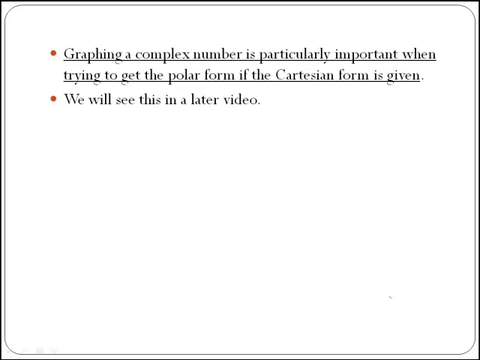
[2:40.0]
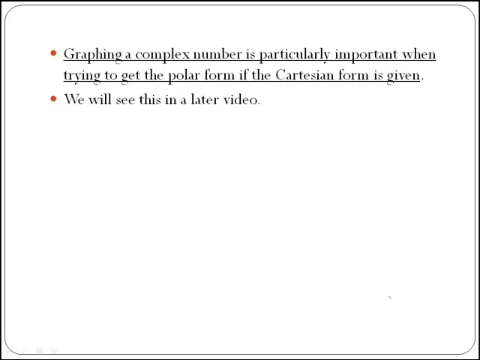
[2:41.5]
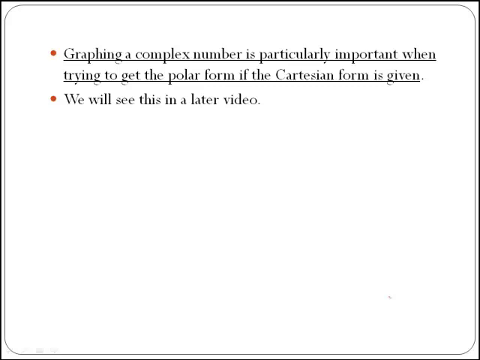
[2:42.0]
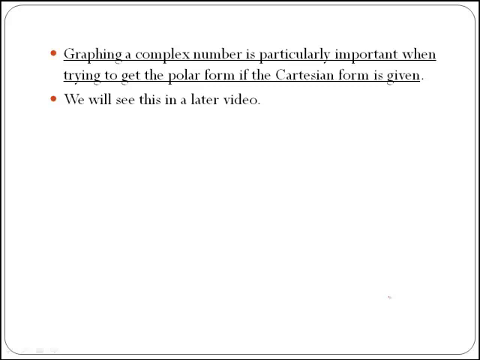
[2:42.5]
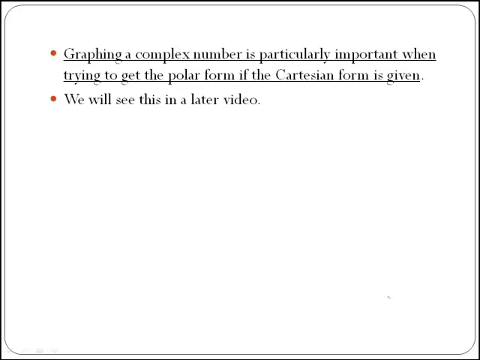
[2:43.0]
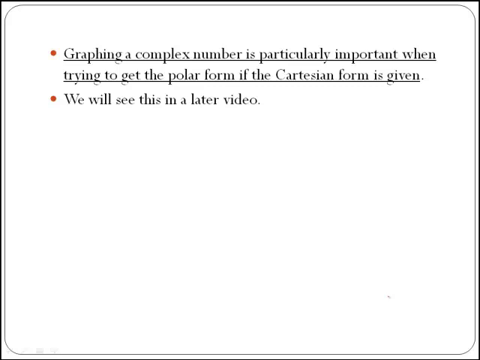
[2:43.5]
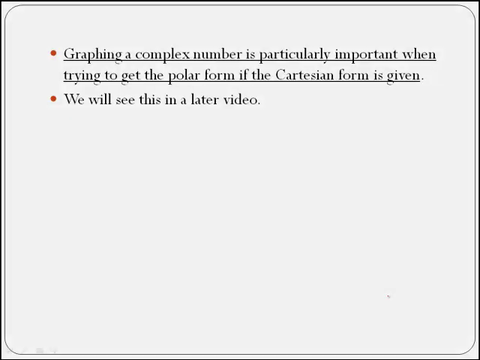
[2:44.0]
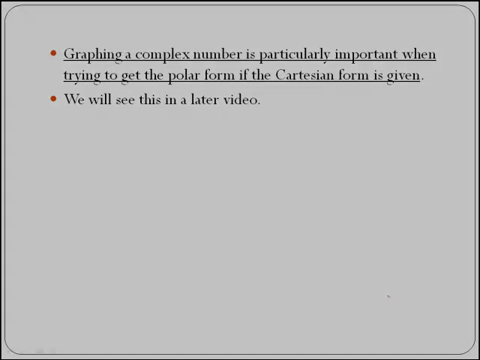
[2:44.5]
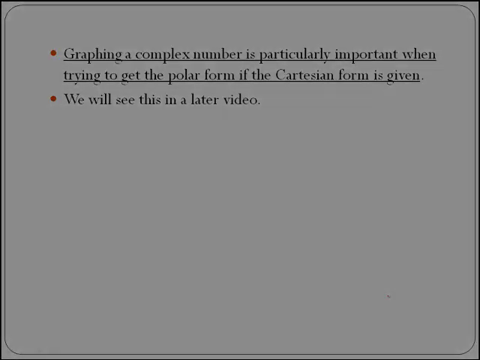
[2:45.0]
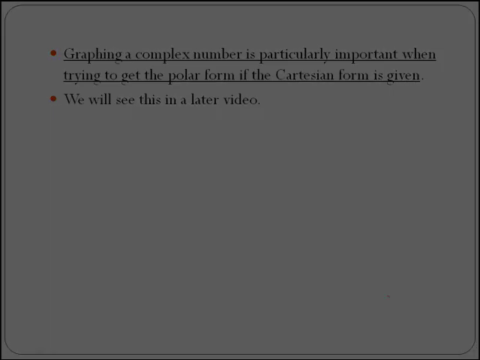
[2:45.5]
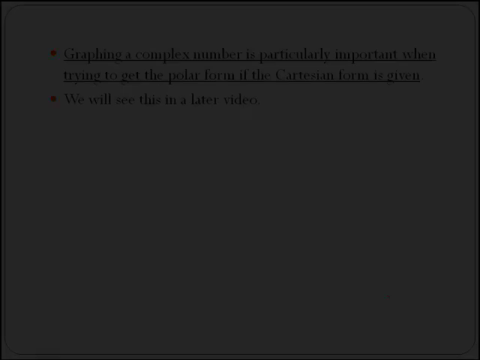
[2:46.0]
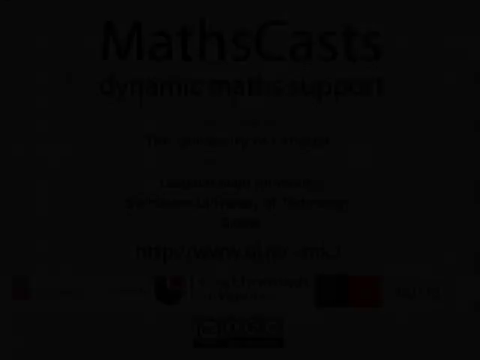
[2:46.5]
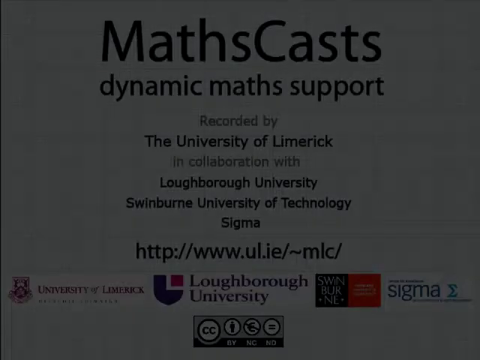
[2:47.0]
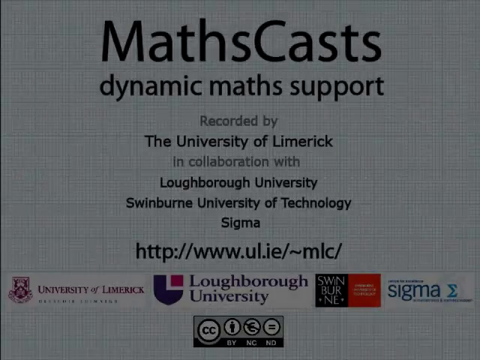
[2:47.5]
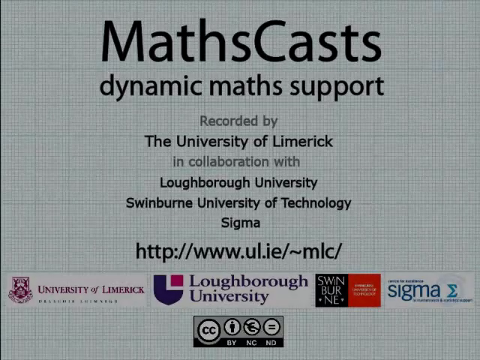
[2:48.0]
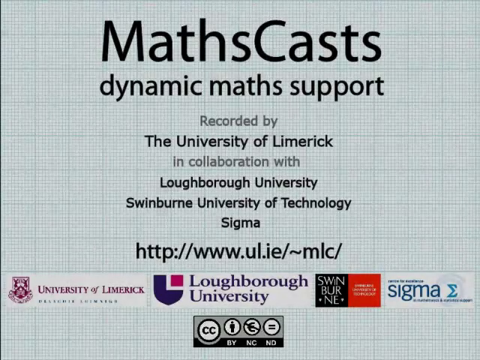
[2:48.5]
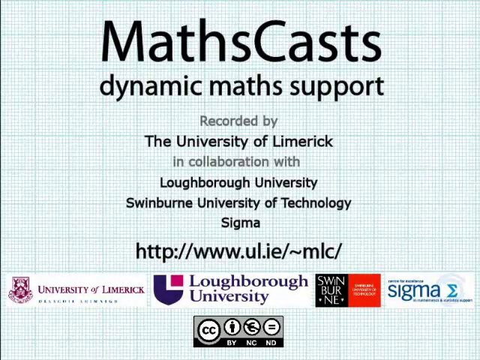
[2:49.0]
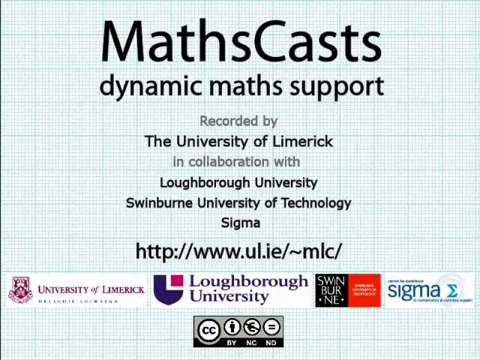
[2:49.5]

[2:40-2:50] The bullet-point slide has a white background and gray border. The first bullet point reads "graphing a complex number is particularly important when trying to get the polar form if the Cartesian form is given," and it is underlined. The second bullet point reads "we will see later in this video." The slide stays on screen for a while, then fades out and fades back in to a screen like the original one with a blue background. It shows "MathCast" and "dynamic math support," and states that it was recorded by the University of Limerick in collaboration with Lundberg University, Swinburne University Technology, and Sigma. Most of the text is in big, bold black letters, except for phrases like "recorded by" and "in collaboration." A website is given, and the same logos as on the first screen appear, while the presenter's name is no longer shown. At the bottom there is also something that looks like a closed-captioning icon, with a figure, something blocked out and an equal sign.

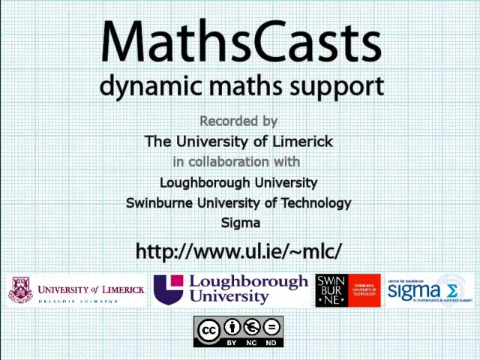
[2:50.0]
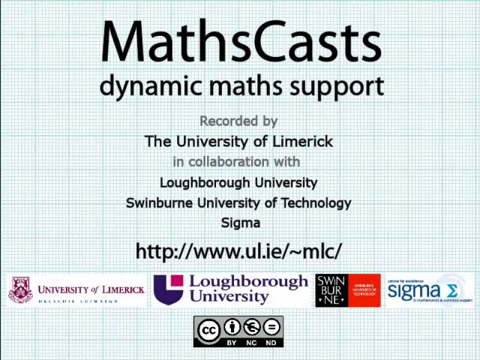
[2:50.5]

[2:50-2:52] The final slide has a blue background set up in squares that looks like graphing paper. "MathCast" is in bold black letters and is the largest text. Below it, "dynamic math support" is in smaller, less bold lettering. "Recorded by" is in very small, unbolded lettering, and "University of Limerick" is bigger and bolded. "In collaboration with" is in smaller gray lettering, followed in bold black by "Lindbergh University, Swinburne University Technology, Sigma University." A website is shown in big bold text, larger than most of the other text. The logos of the entities involved are at the bottom, and below them is a small box that looks like a closed-captioning icon, with a person on it, something bold that cannot be made out, and an equal sign.